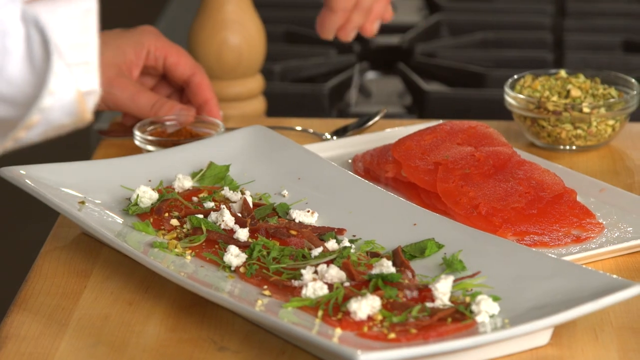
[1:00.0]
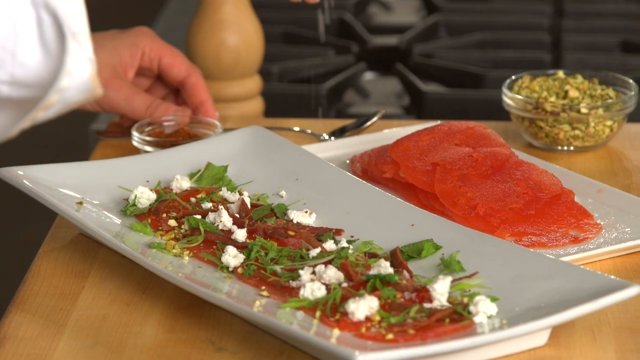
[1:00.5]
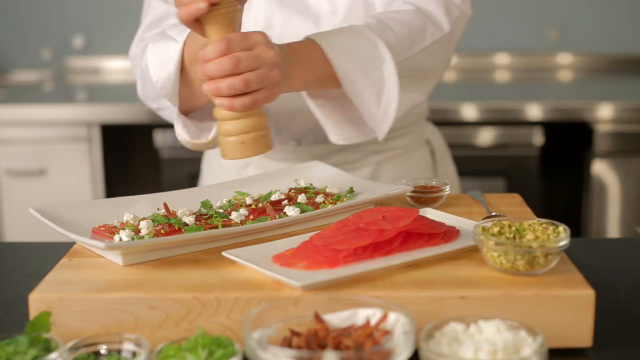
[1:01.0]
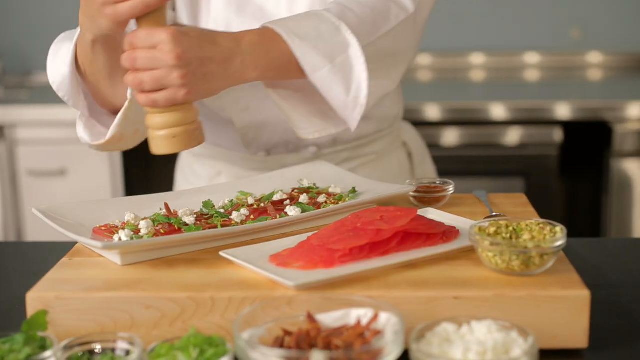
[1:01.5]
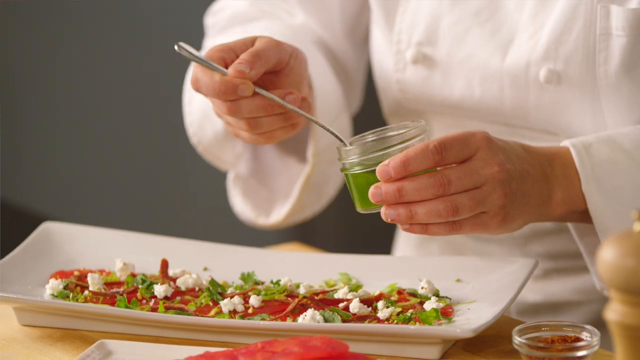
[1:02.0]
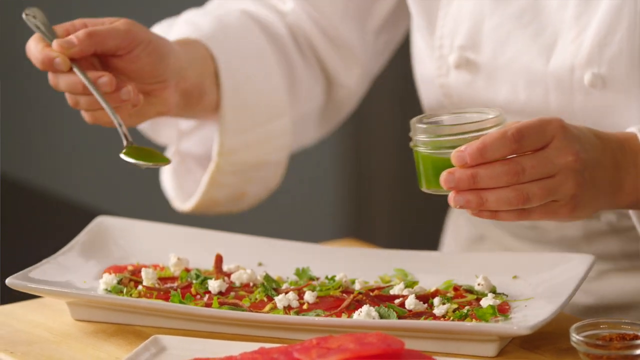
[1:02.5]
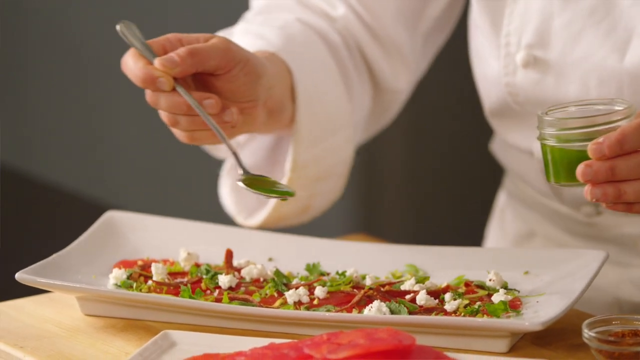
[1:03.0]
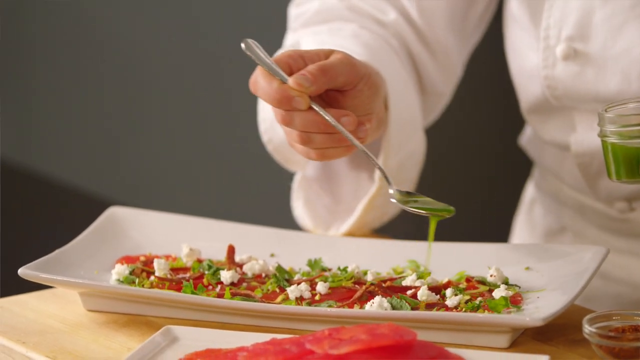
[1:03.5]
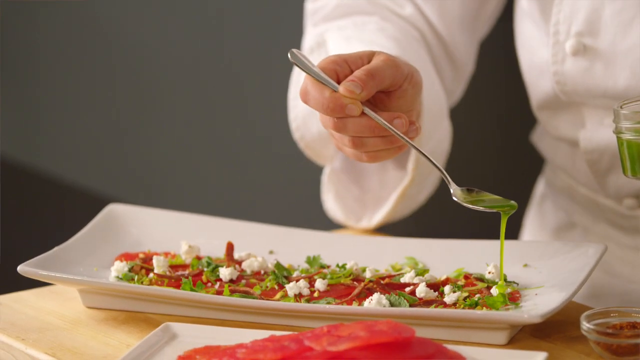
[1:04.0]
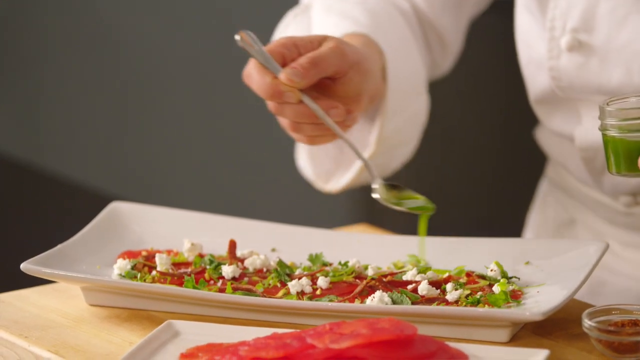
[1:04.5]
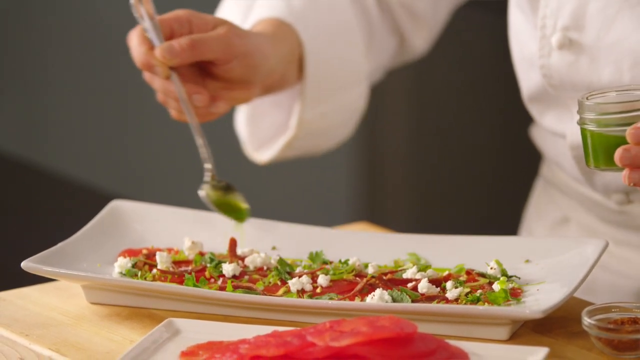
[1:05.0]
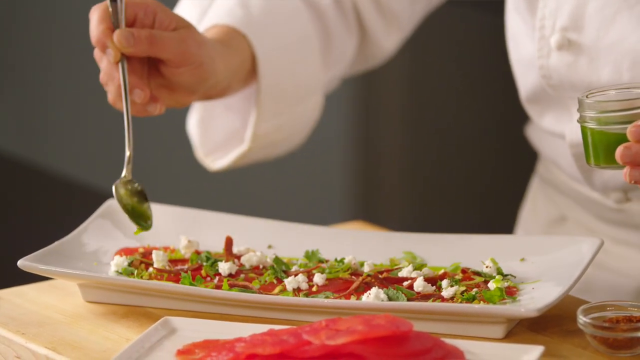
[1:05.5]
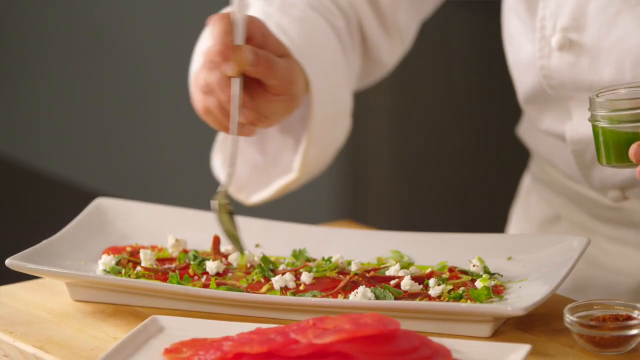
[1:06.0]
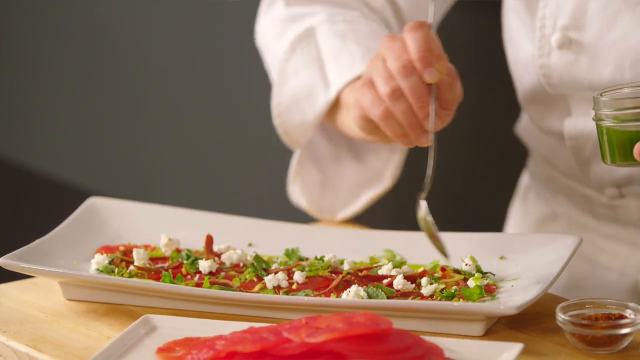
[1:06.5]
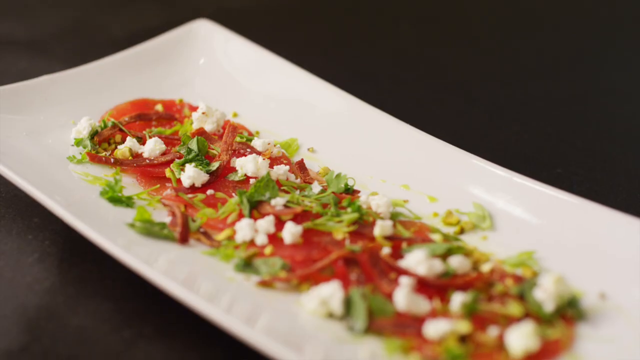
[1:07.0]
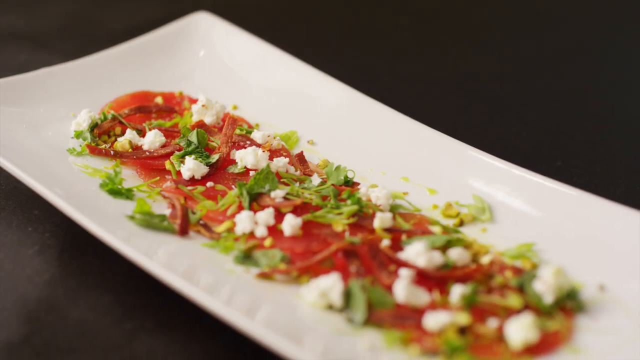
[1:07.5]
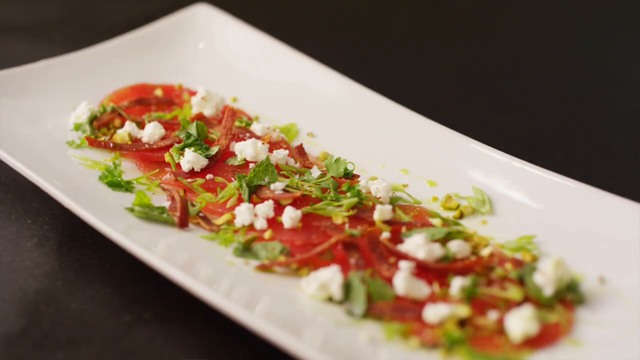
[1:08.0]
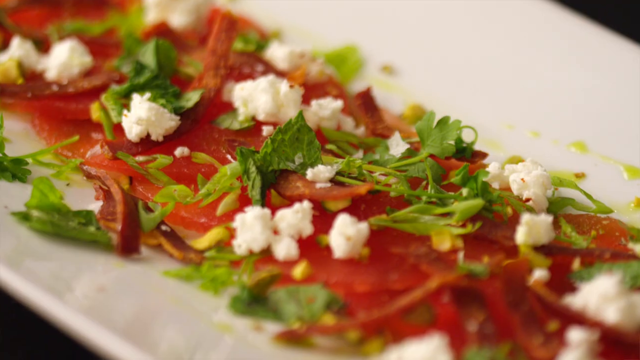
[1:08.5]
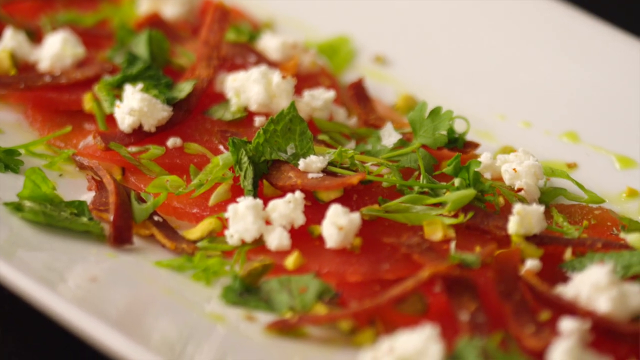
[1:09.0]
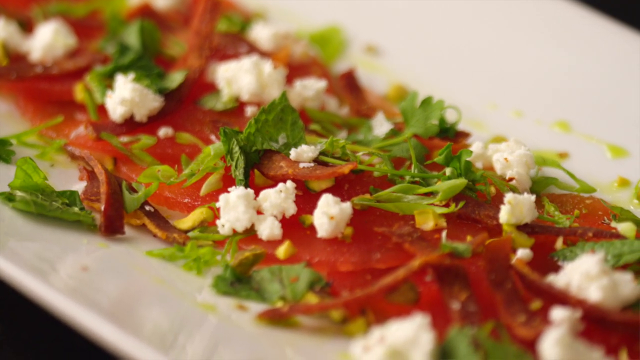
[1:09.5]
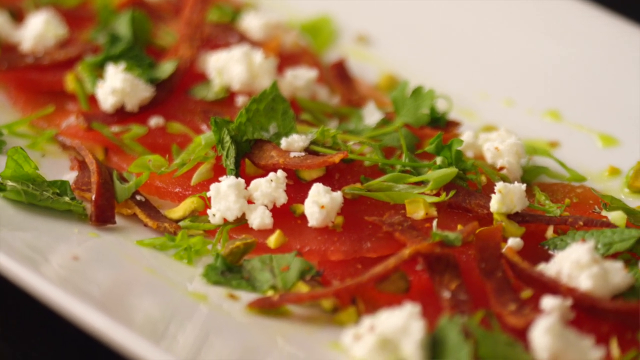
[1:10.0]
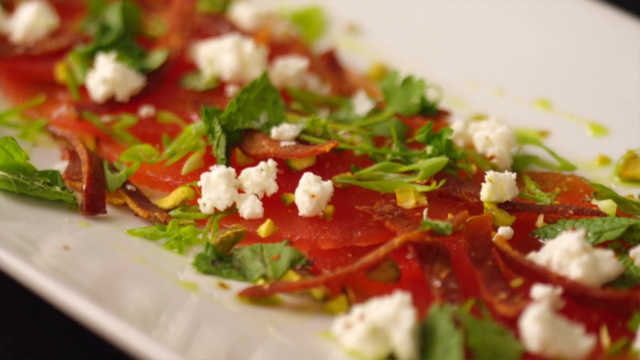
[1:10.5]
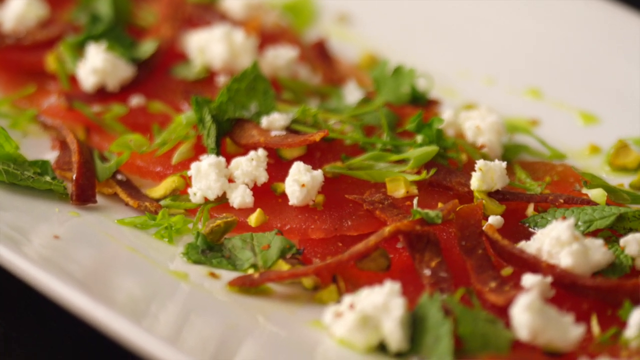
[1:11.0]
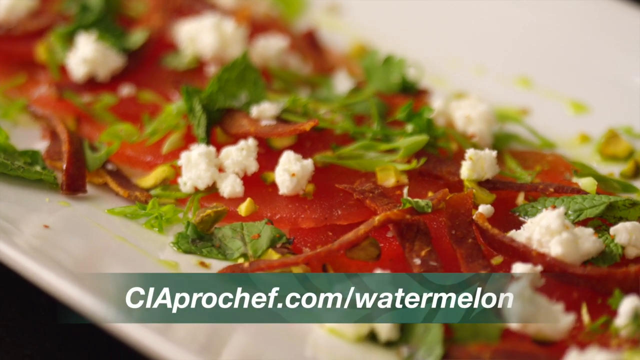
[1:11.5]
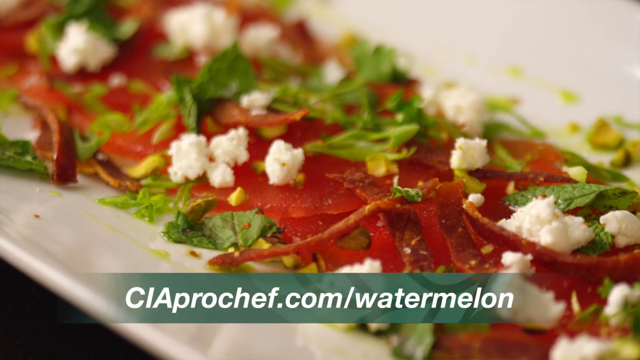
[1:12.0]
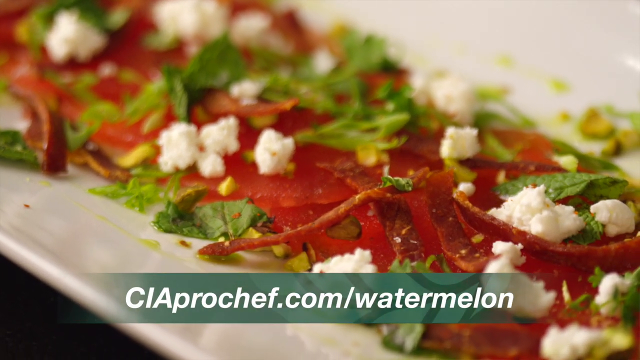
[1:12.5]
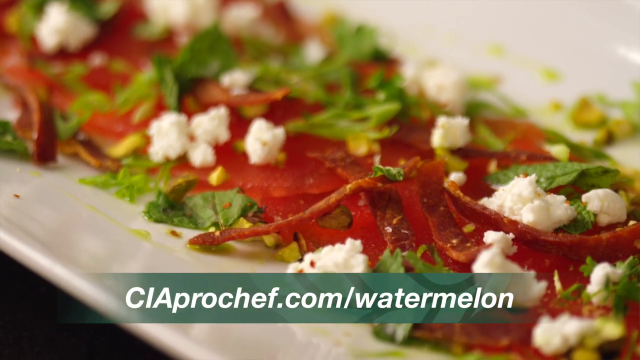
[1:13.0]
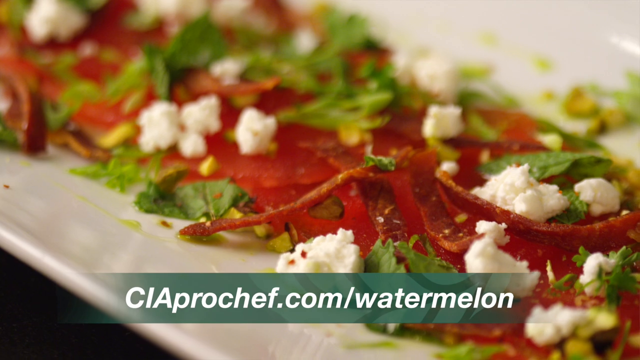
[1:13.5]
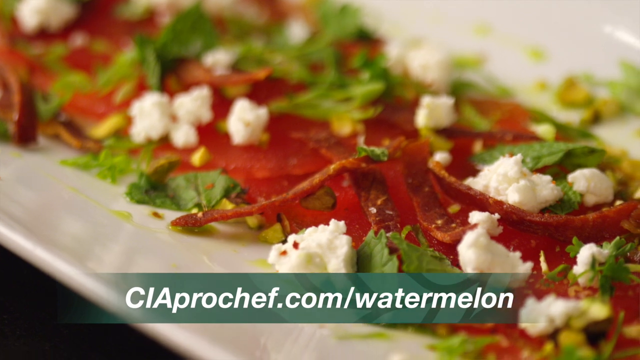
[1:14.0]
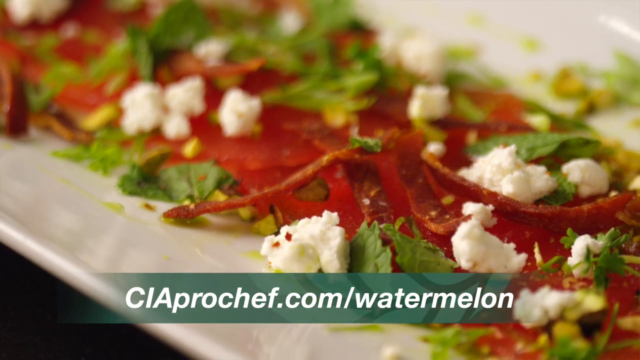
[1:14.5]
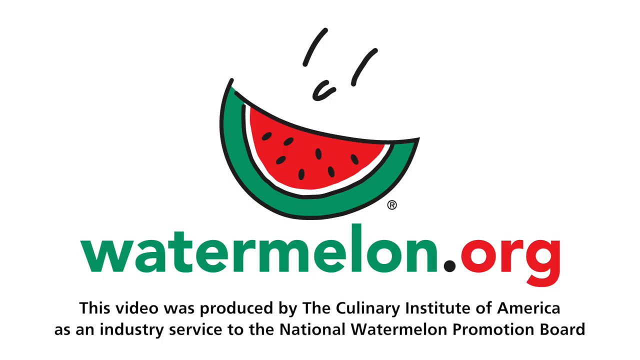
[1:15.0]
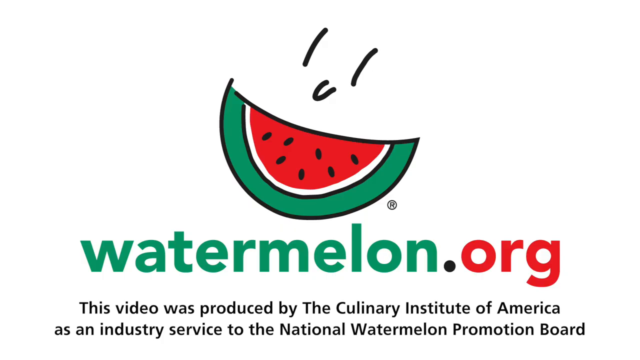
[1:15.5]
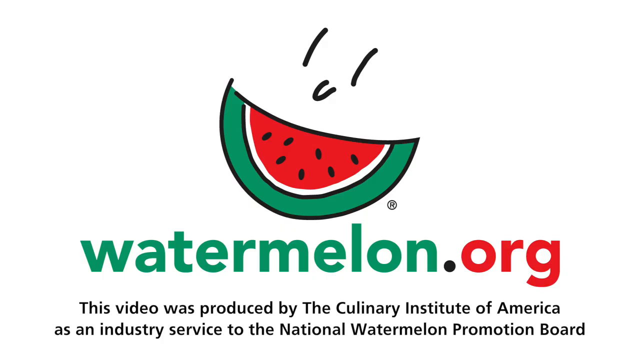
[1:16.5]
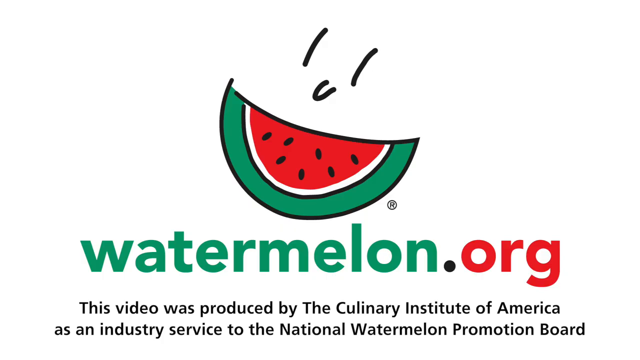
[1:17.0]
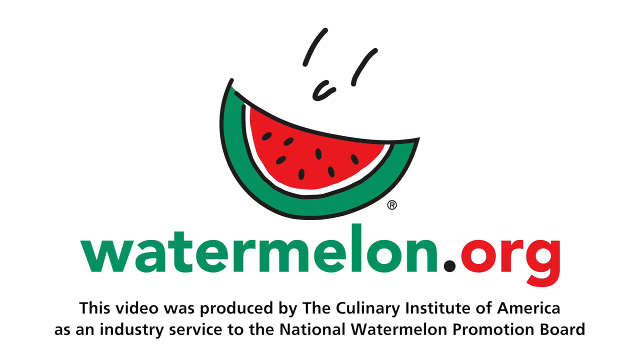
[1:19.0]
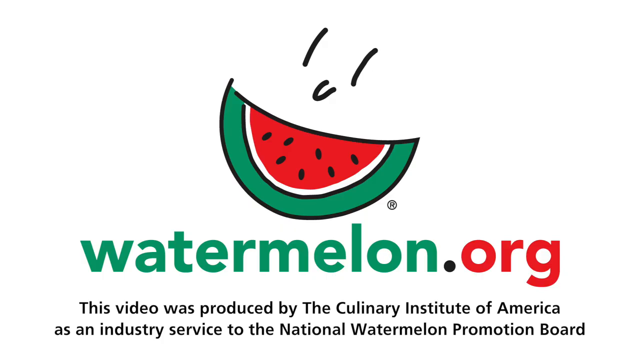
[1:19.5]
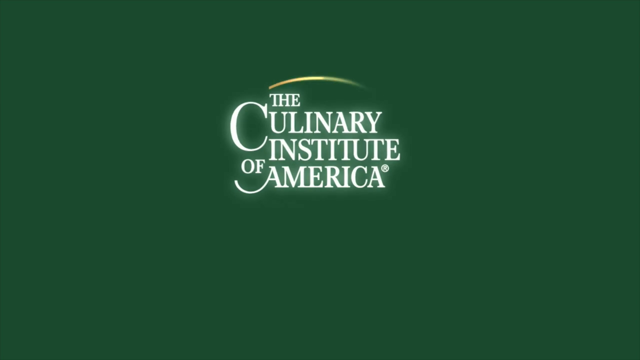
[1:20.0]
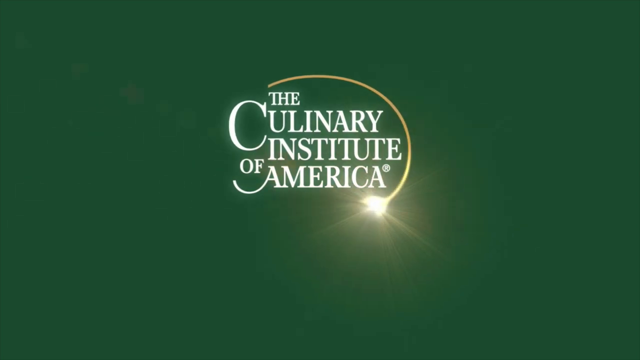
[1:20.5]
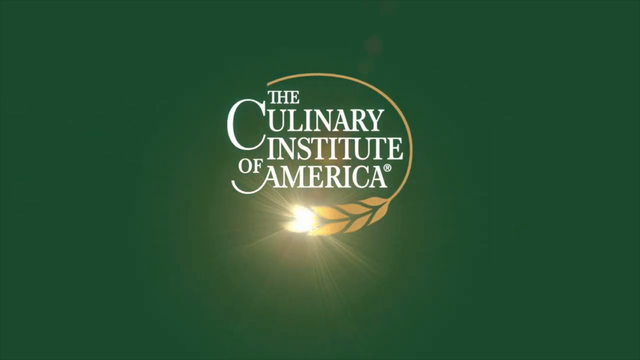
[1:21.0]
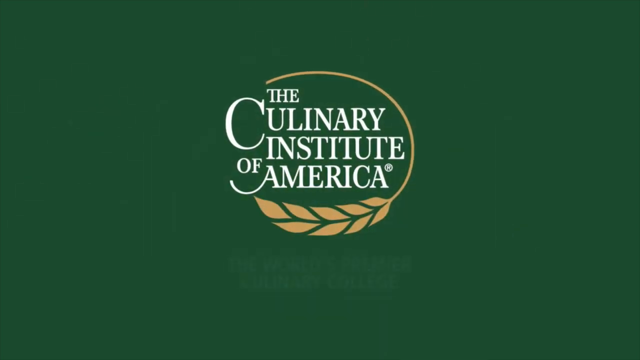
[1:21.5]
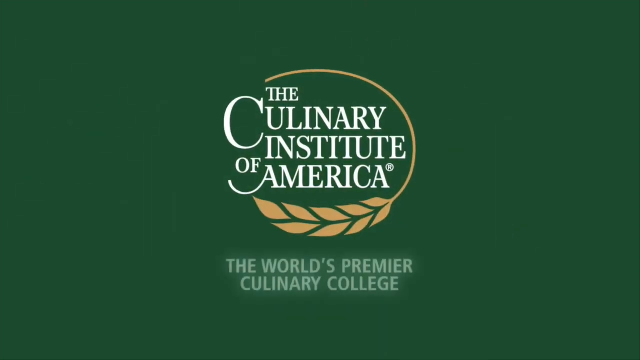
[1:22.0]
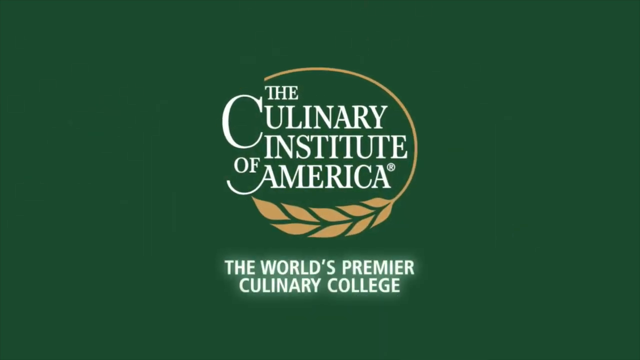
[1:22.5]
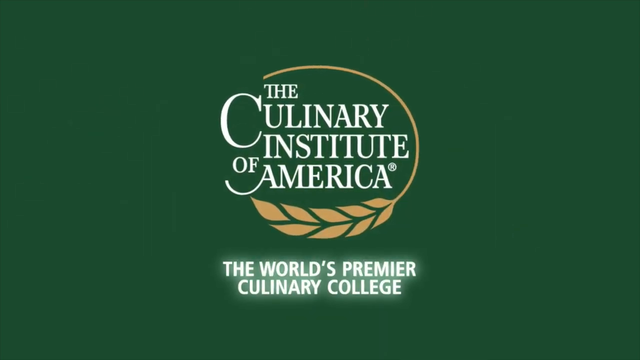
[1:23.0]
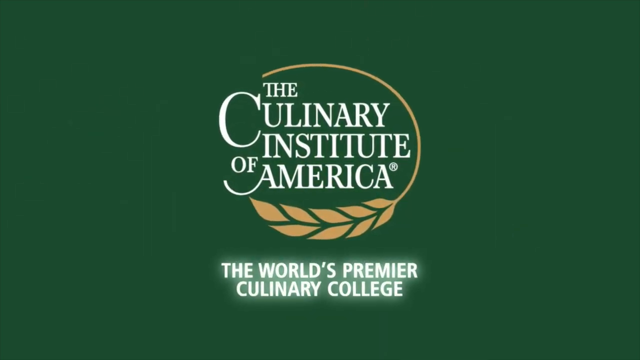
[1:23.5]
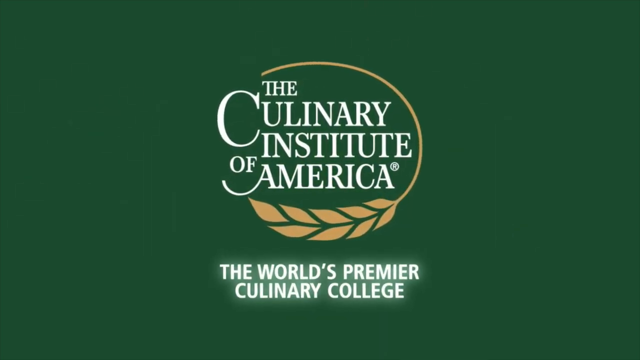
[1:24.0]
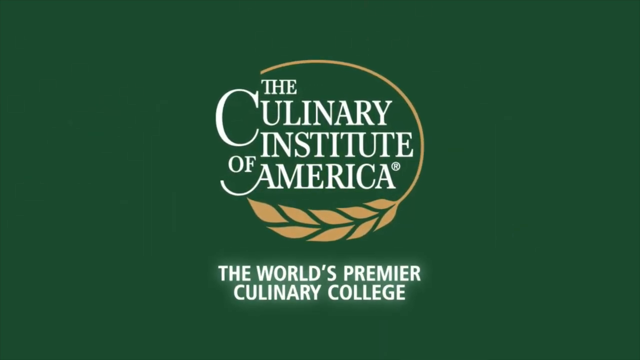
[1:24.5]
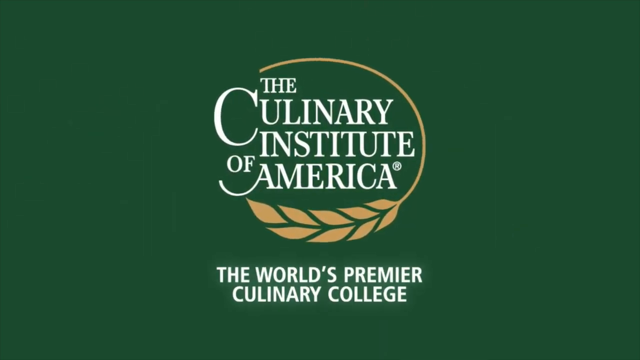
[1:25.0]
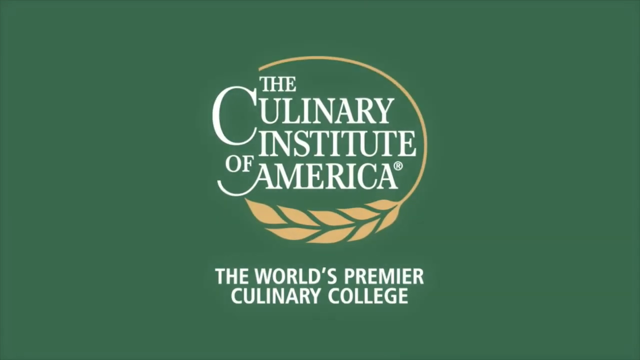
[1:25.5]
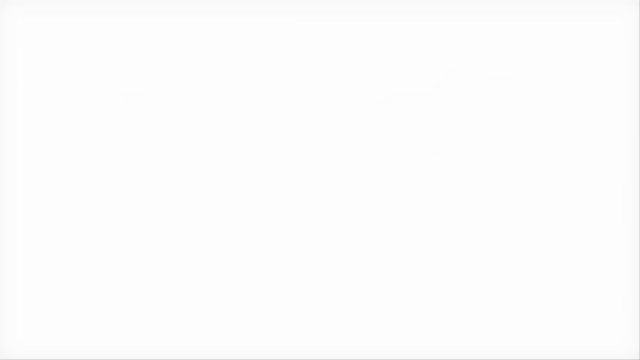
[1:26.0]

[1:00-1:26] A chef is making a watermelon dish: sliced watermelon on a white plate with little green onions and something like cottage cheese over it. They sprinkle some stuff over it, and she puts some unidentified green liquid over it. Text then mentions "watermelon.org" and reads "this video is produced by the Culinary Institute of America as an industry service to the National Watermelon Promotion Board." A symbol for the Culinary Institute of America appears with "the world's premier culinary college."